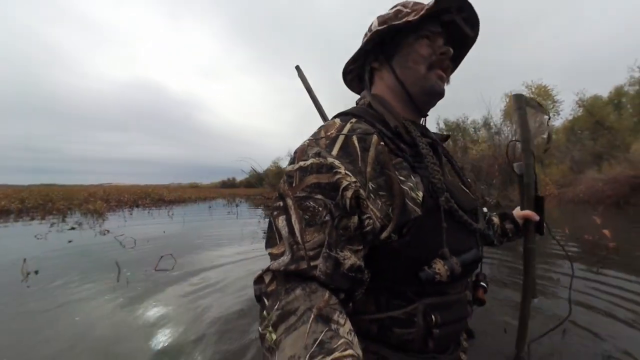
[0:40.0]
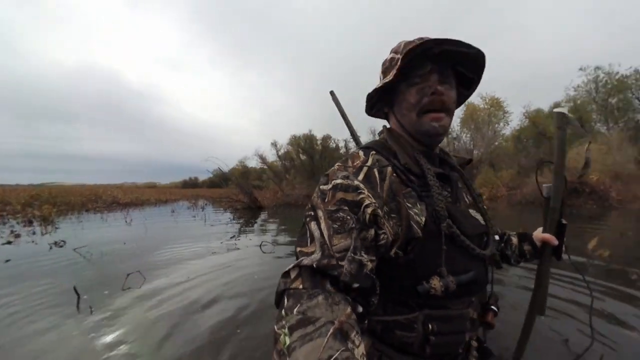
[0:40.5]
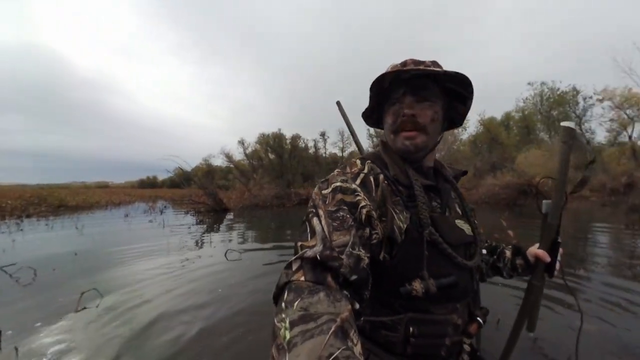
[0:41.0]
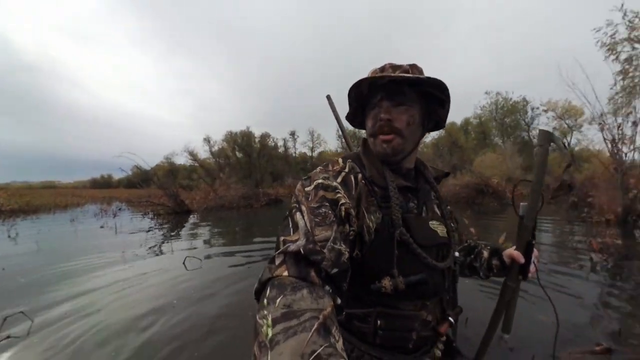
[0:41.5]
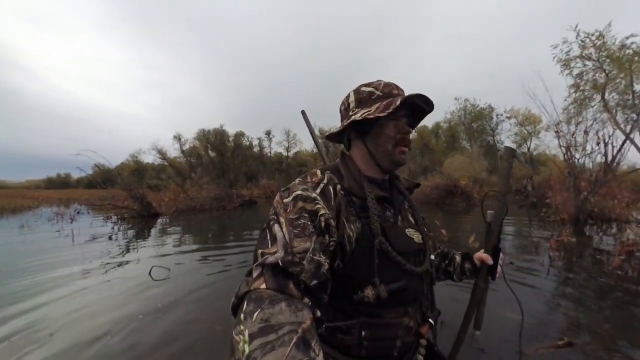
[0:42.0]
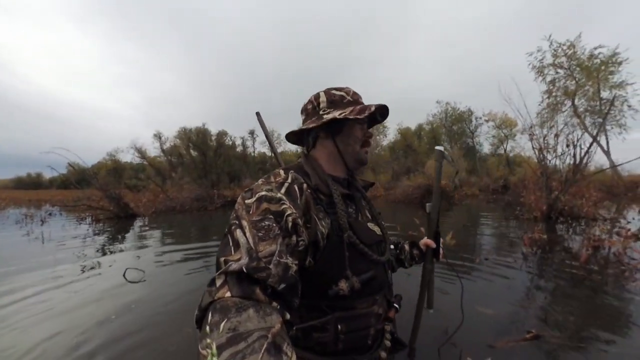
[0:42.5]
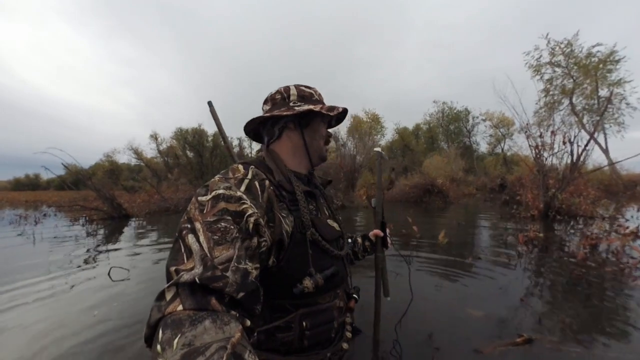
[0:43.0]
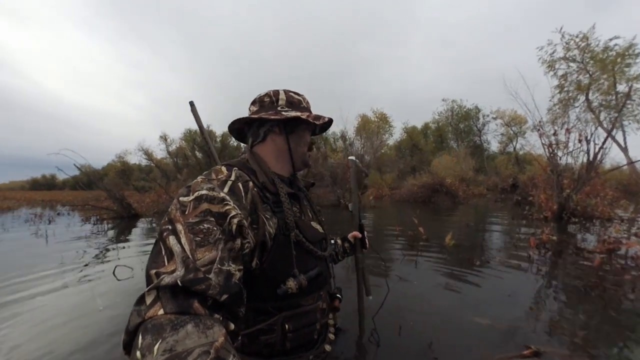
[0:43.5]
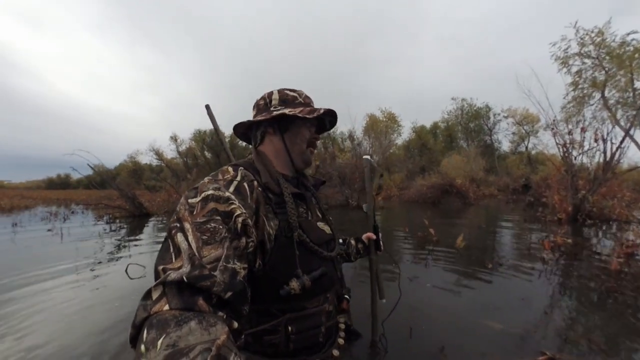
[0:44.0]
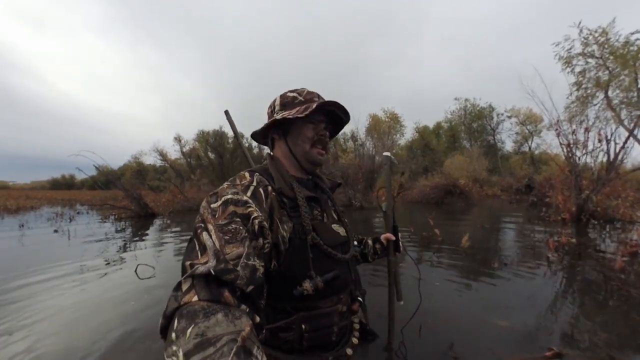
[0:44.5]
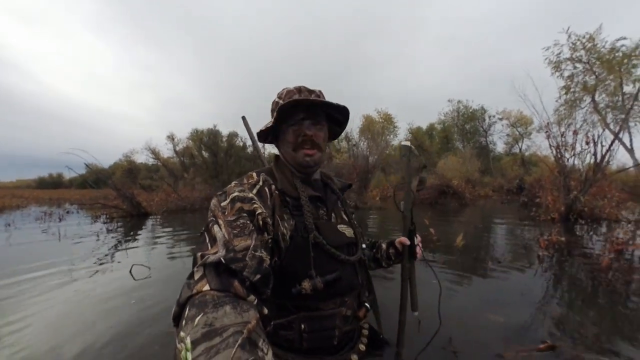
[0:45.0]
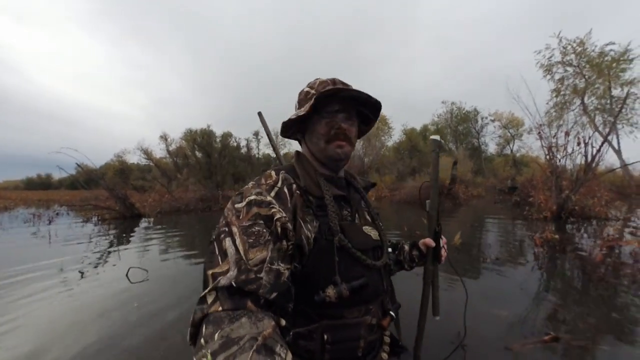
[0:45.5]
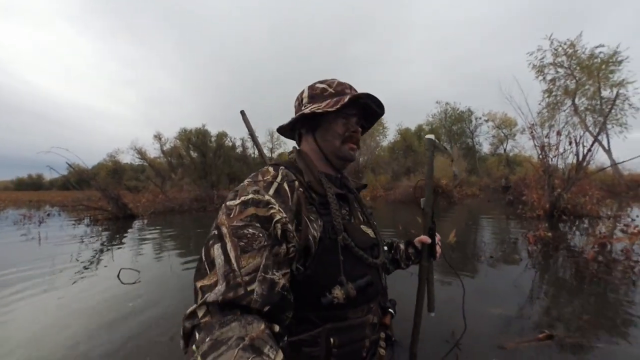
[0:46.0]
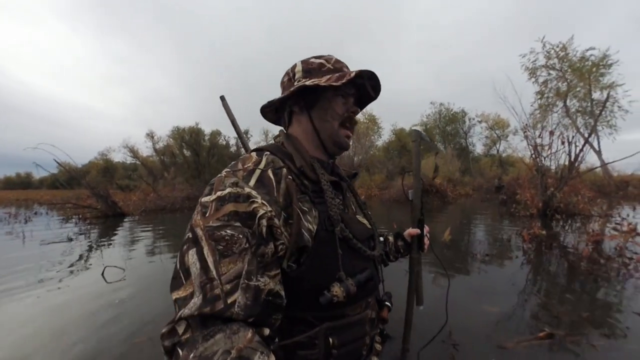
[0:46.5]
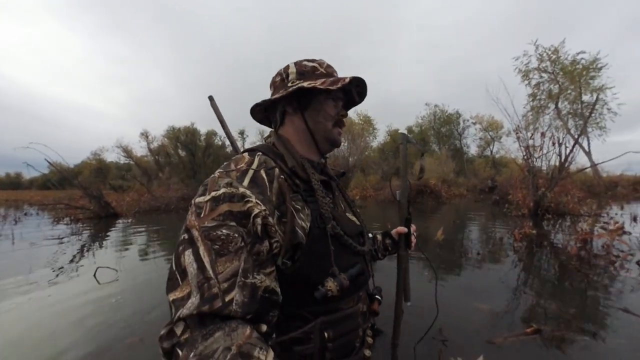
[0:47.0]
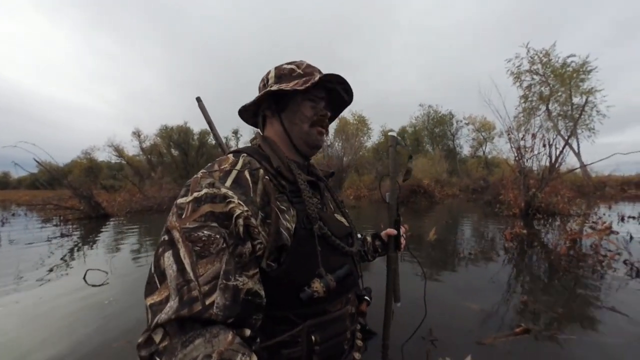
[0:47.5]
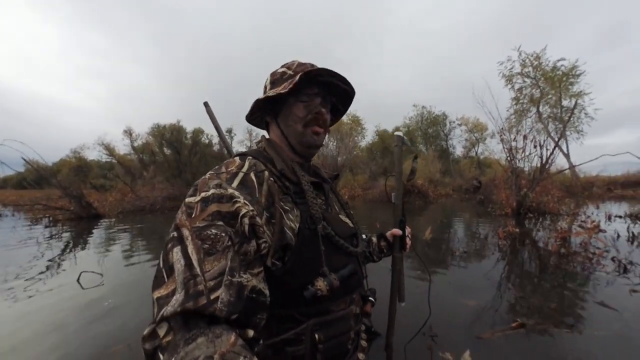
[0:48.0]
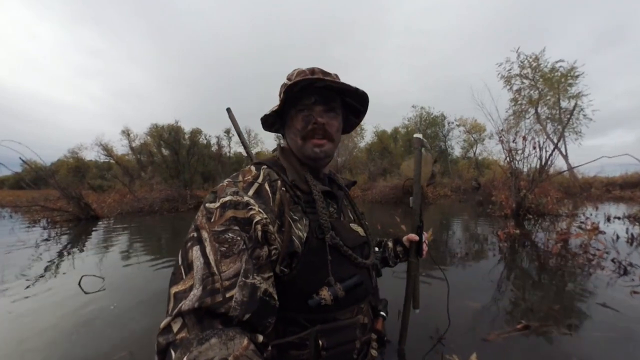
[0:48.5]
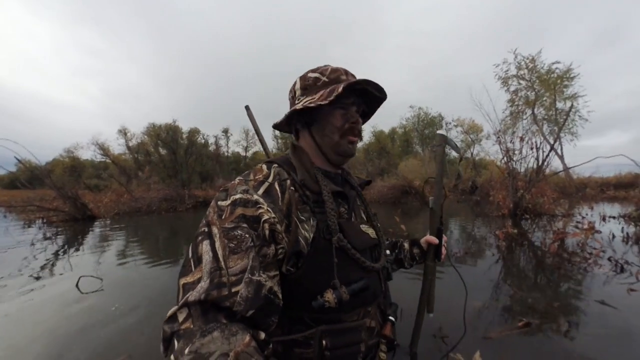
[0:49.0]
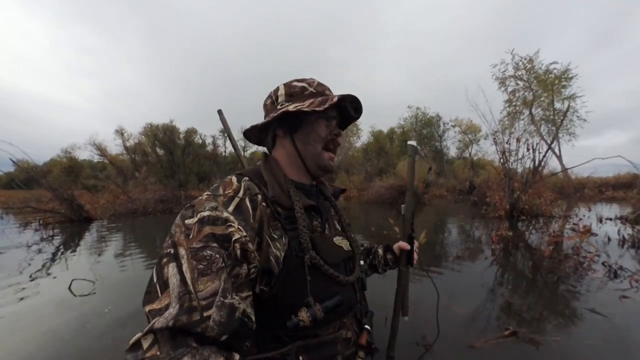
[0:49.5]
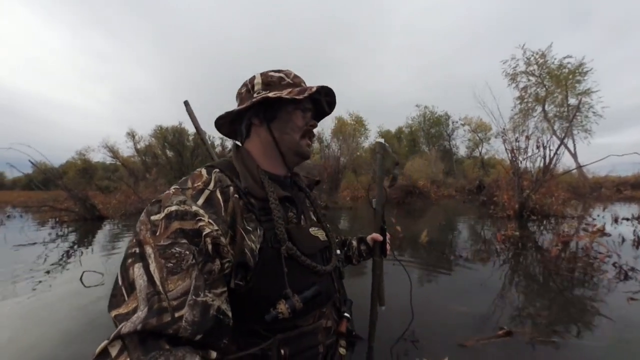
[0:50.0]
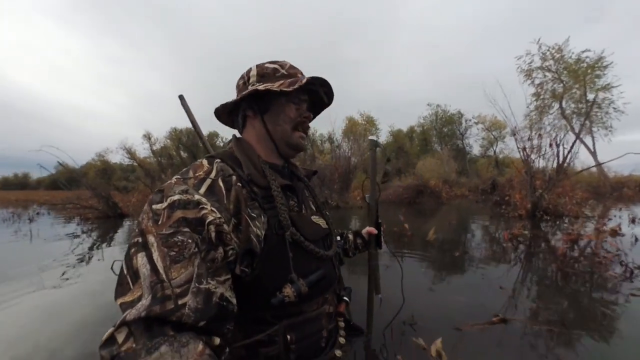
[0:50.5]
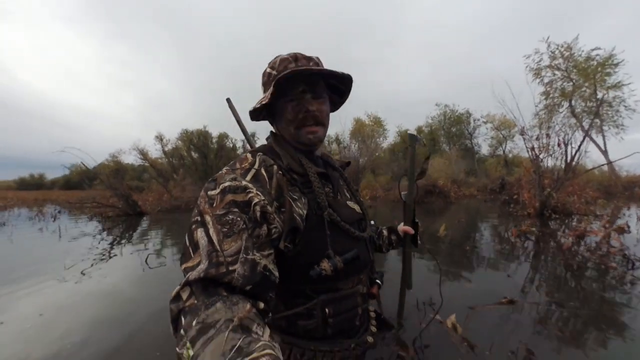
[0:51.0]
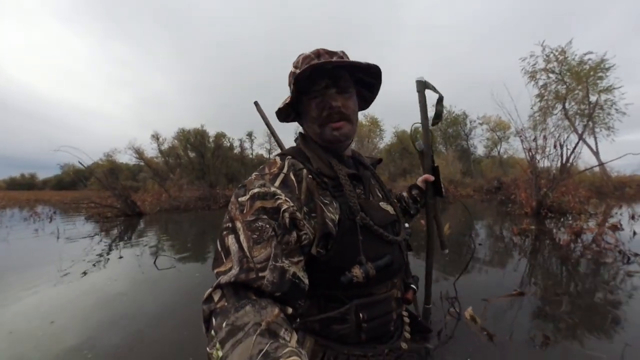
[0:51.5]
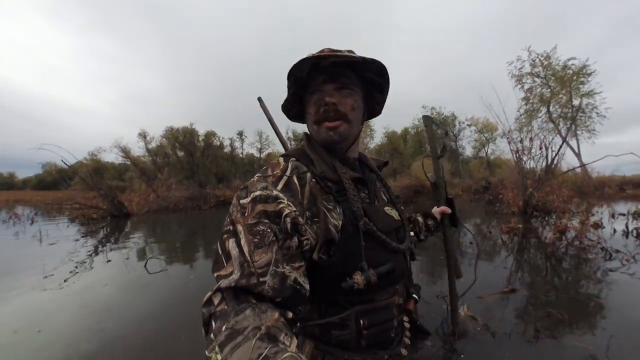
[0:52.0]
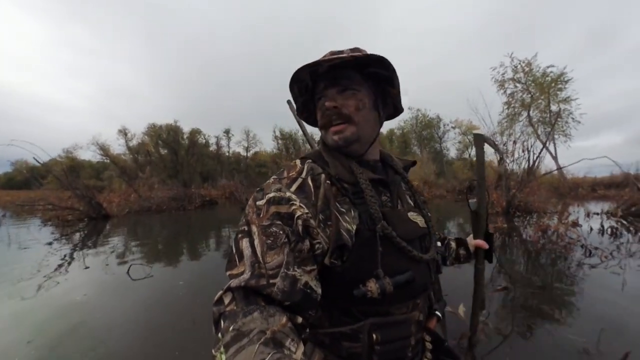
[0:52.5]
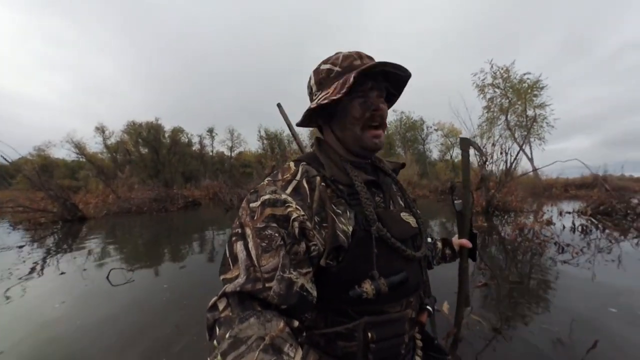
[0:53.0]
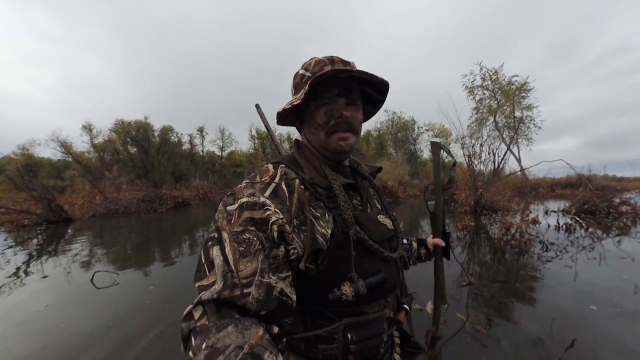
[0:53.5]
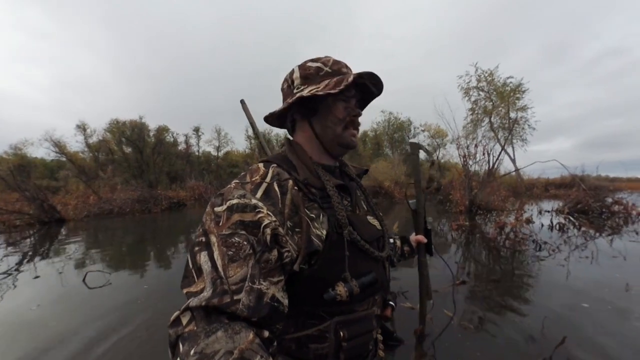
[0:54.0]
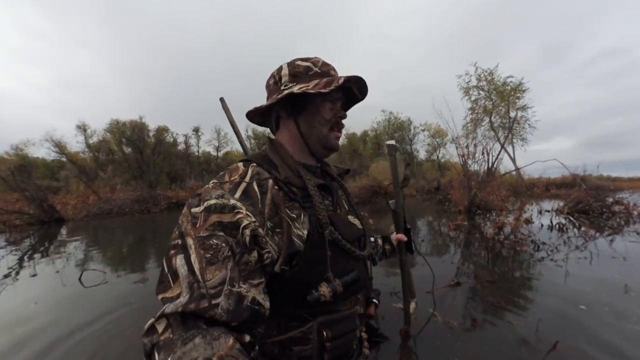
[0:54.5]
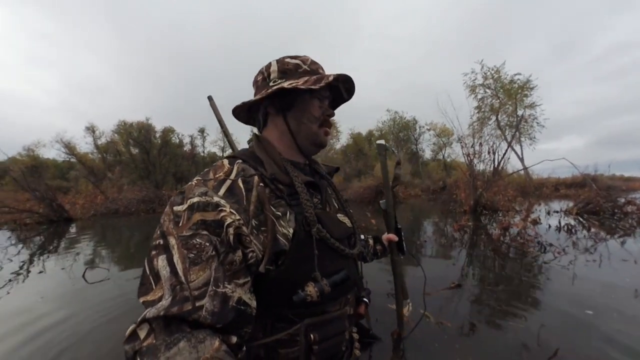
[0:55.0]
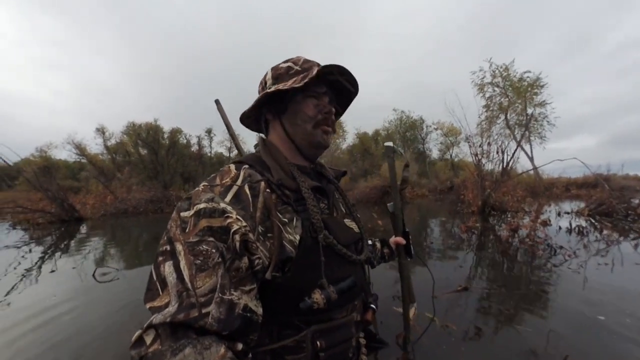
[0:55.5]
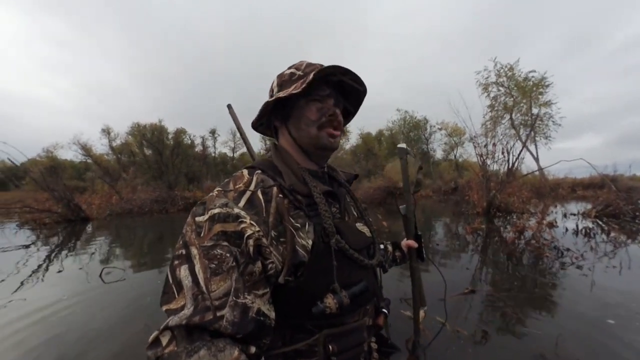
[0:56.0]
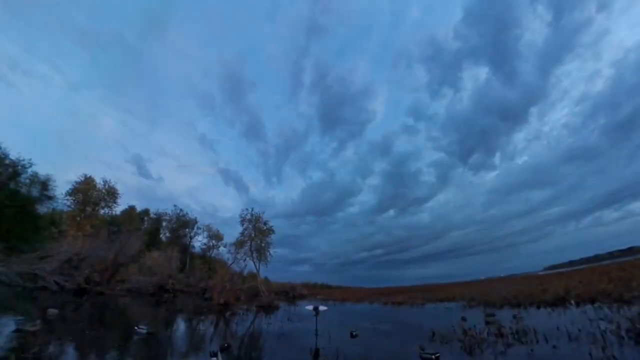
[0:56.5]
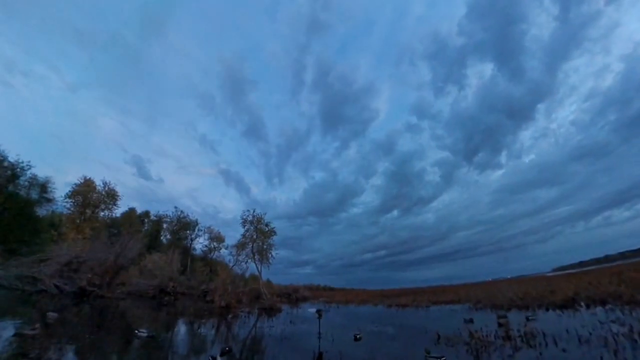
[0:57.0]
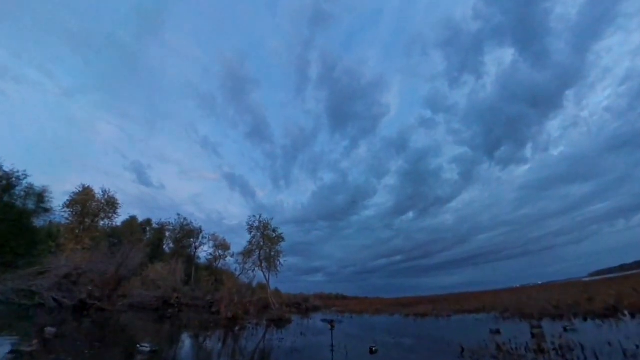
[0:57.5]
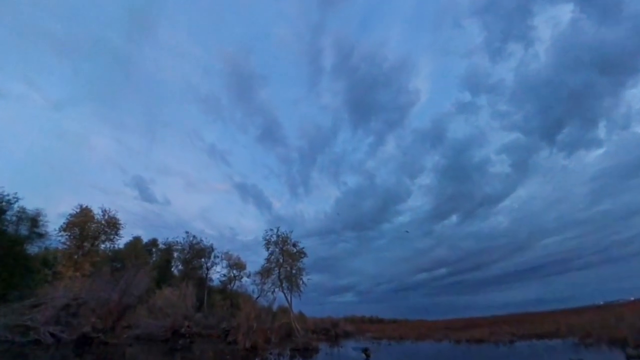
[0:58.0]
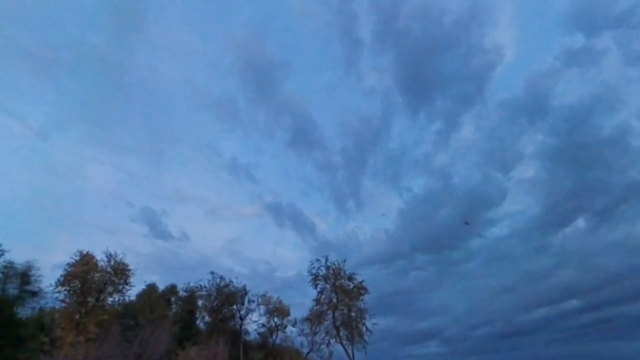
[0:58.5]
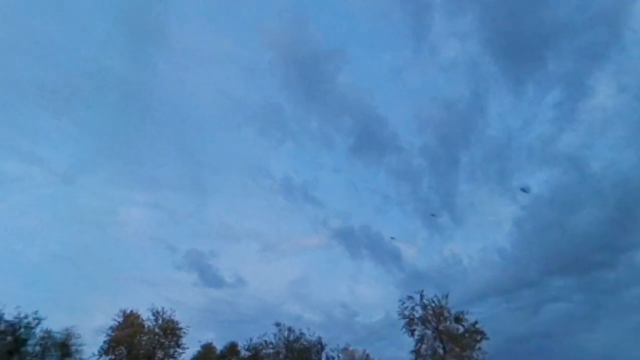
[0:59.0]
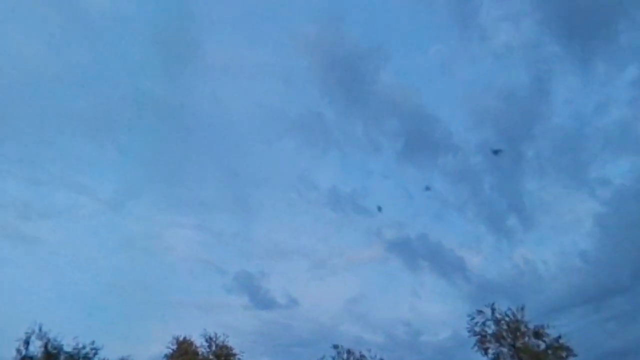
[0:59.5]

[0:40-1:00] The man is shown with more trees, small logs, and plants that may have overgrown but have lost their leaves in the background. His clothes seem to be in a hunting style rather than military. He holds something else with his left hand while holding the stick to move more easily. His hat has some kind of line or string that attaches at his neck, and he wears more equipment, especially on his torso. The video cuts to another scene with a more blue screen and something spinning in the middle of the water. The camera zooms in on the sky to show birds flying around and passing over where the hunter is, possibly his next prey. He also uses the camera to show himself fully in his surroundings.